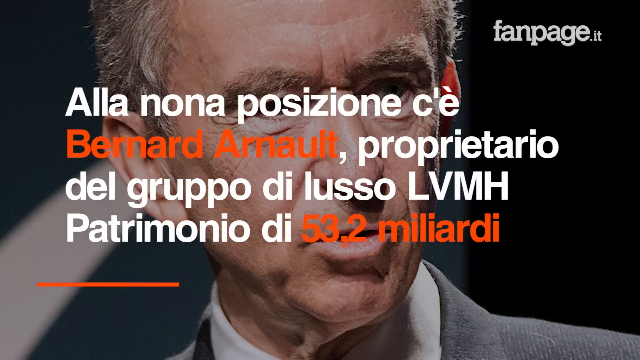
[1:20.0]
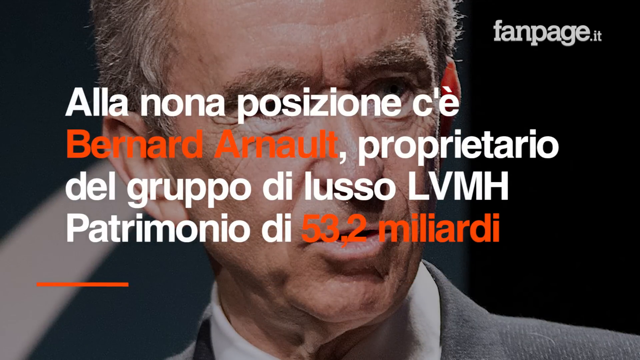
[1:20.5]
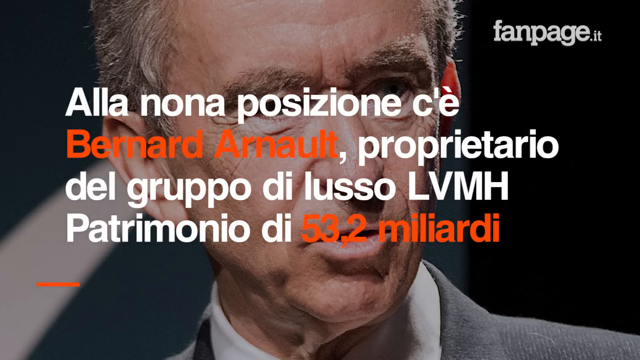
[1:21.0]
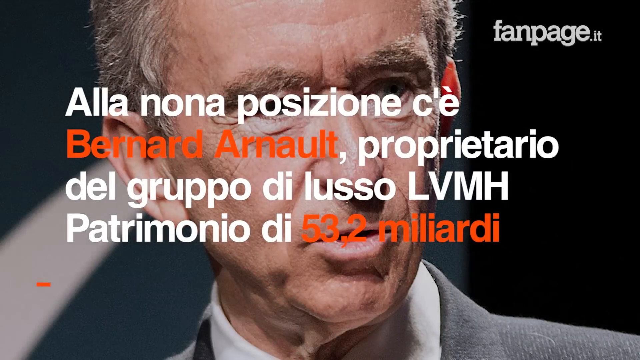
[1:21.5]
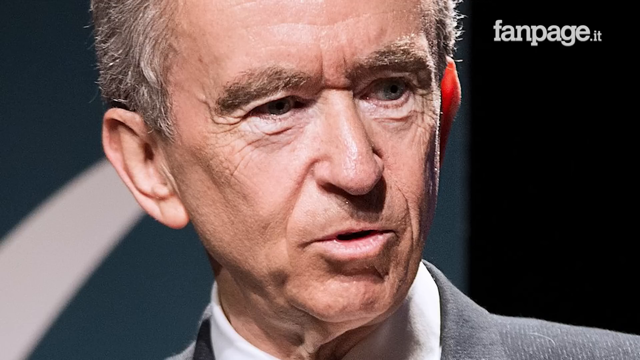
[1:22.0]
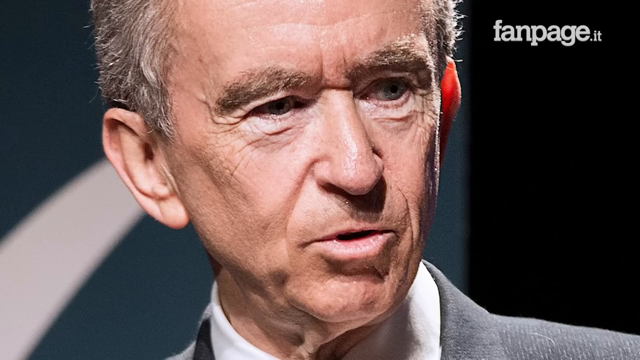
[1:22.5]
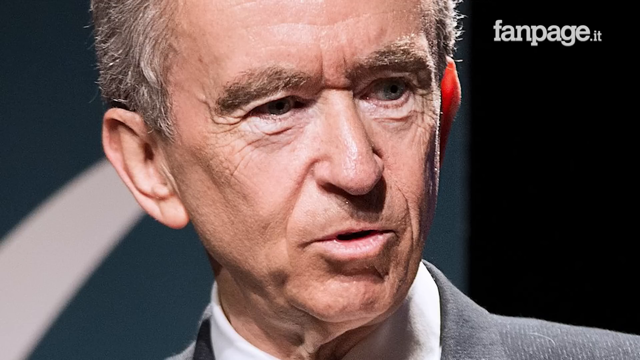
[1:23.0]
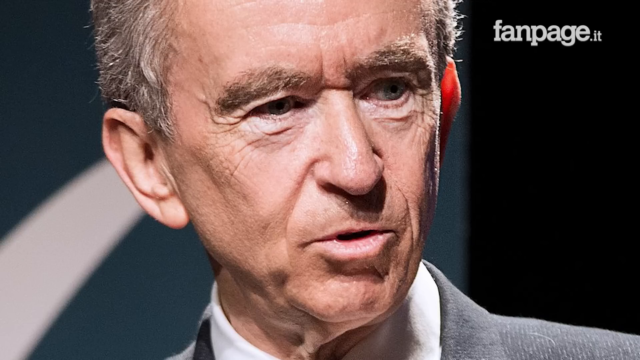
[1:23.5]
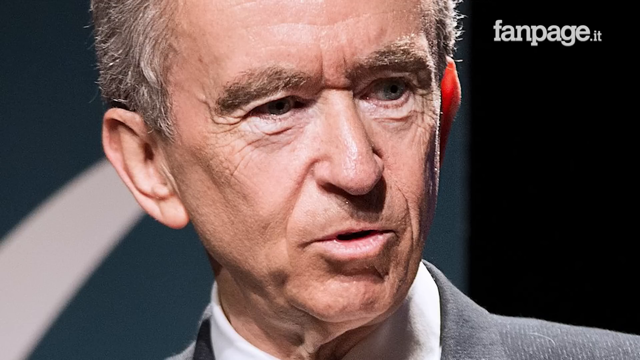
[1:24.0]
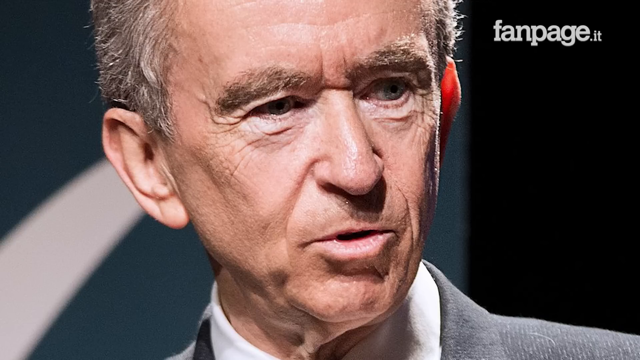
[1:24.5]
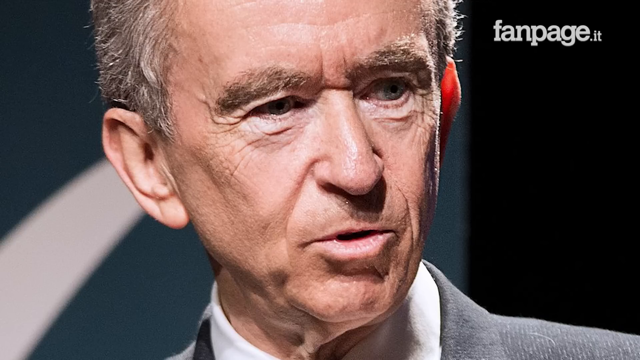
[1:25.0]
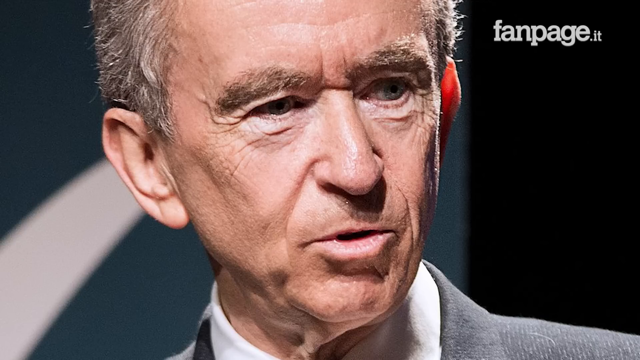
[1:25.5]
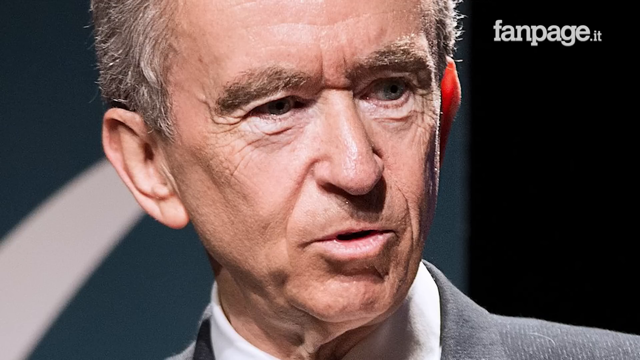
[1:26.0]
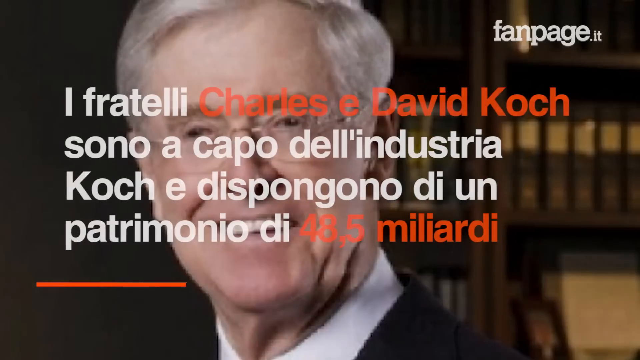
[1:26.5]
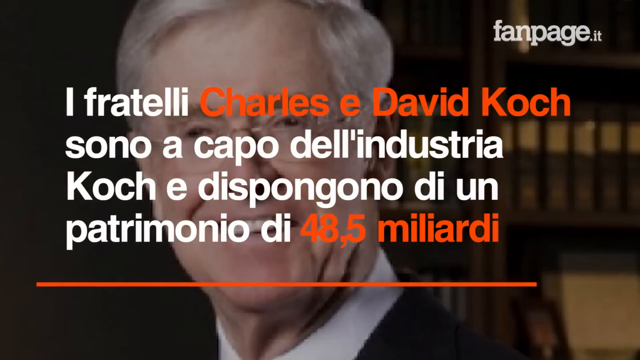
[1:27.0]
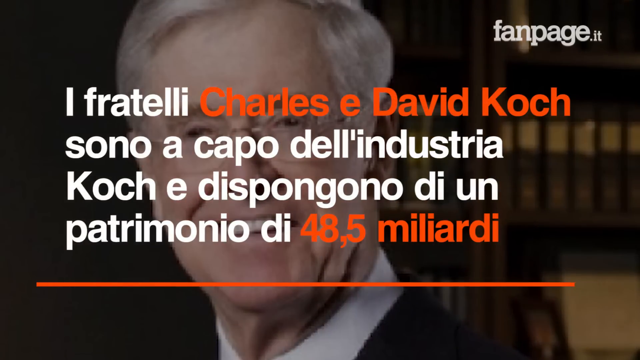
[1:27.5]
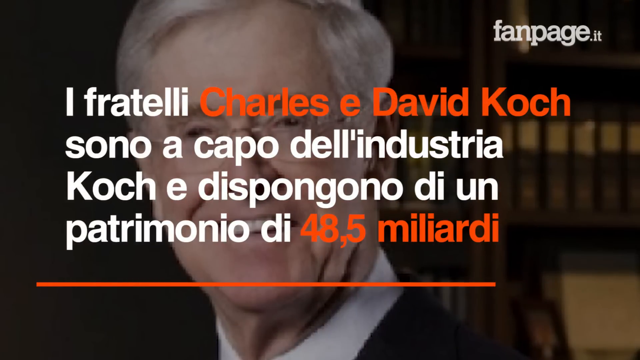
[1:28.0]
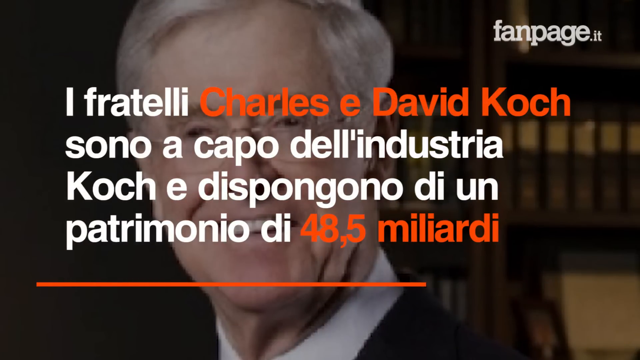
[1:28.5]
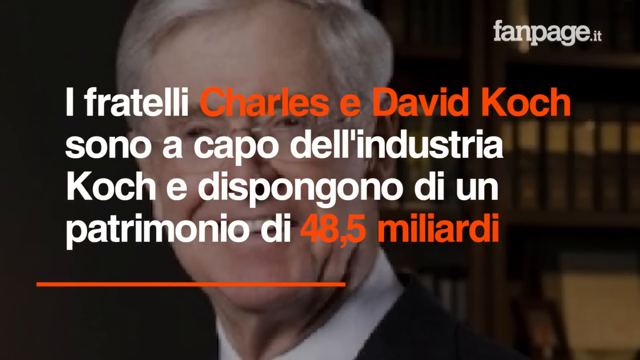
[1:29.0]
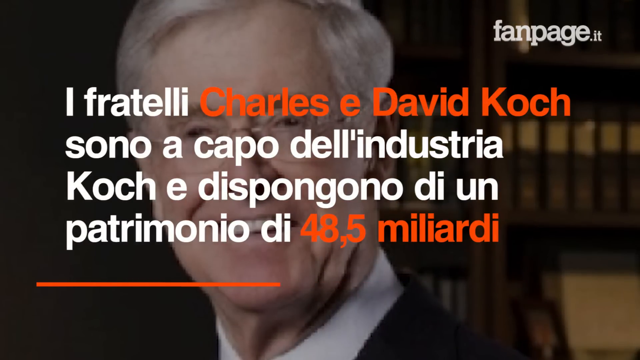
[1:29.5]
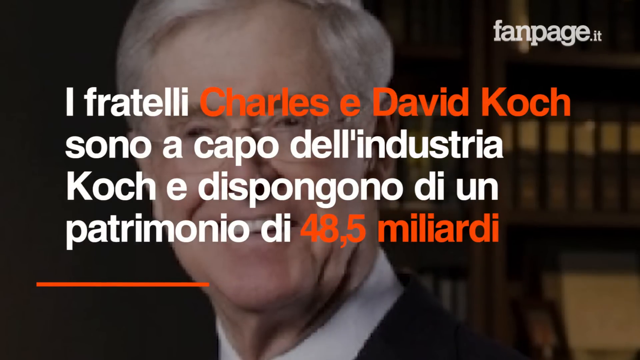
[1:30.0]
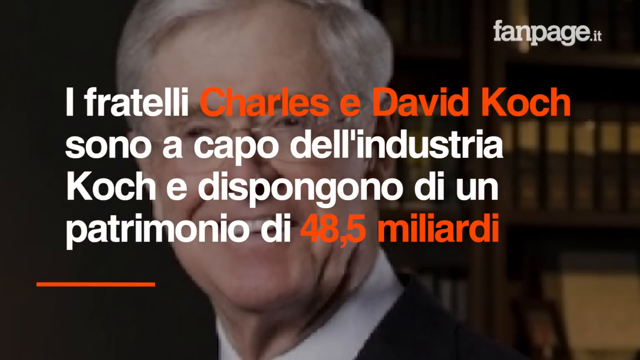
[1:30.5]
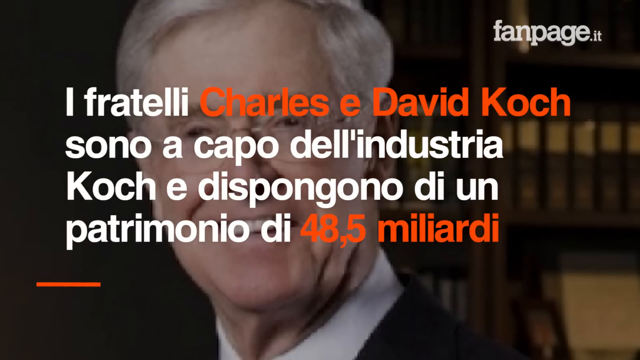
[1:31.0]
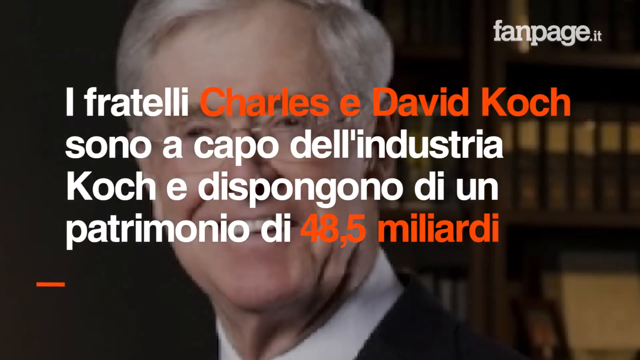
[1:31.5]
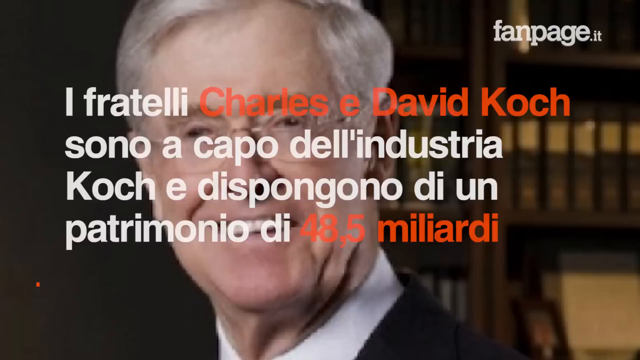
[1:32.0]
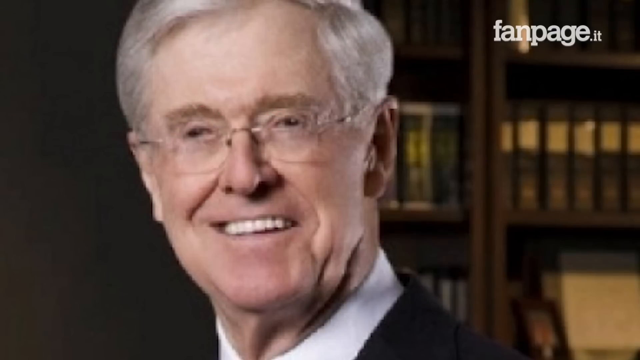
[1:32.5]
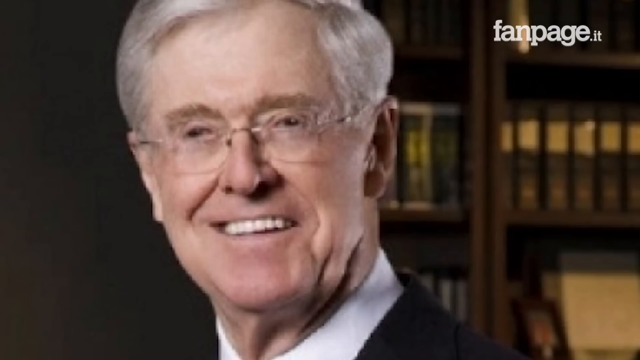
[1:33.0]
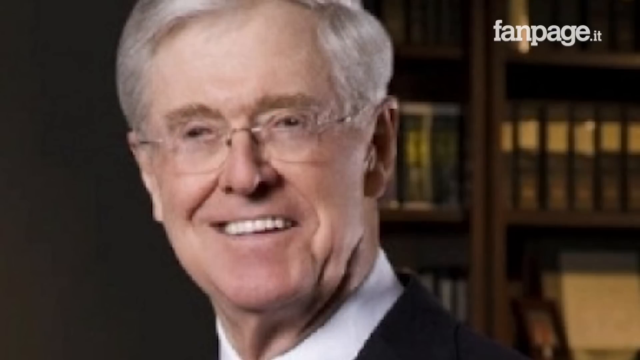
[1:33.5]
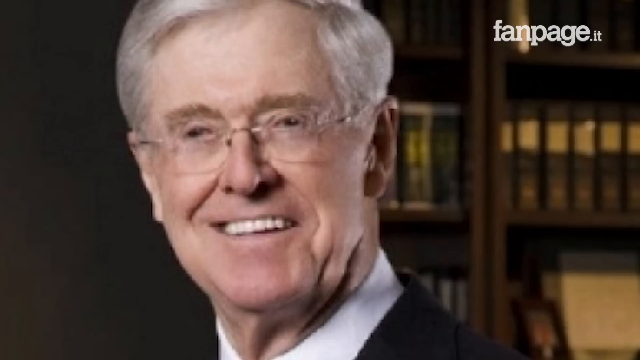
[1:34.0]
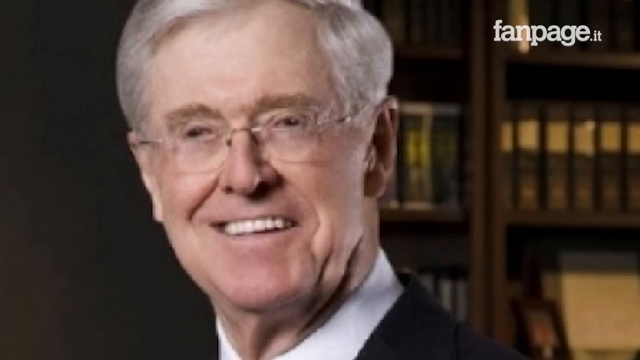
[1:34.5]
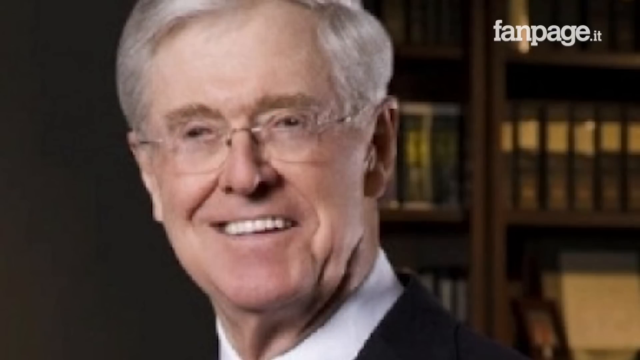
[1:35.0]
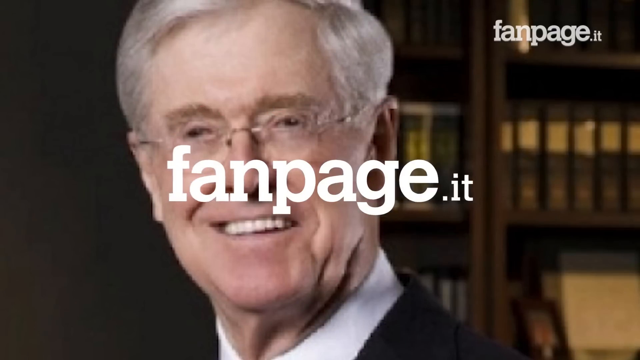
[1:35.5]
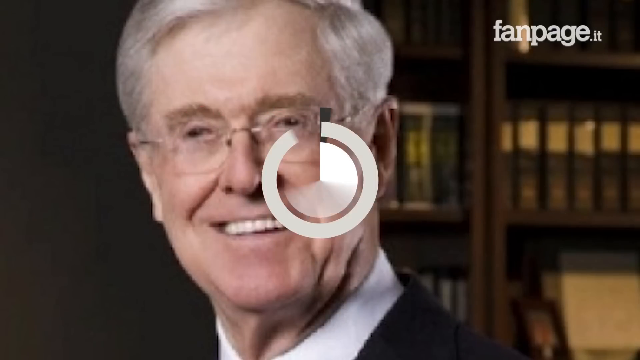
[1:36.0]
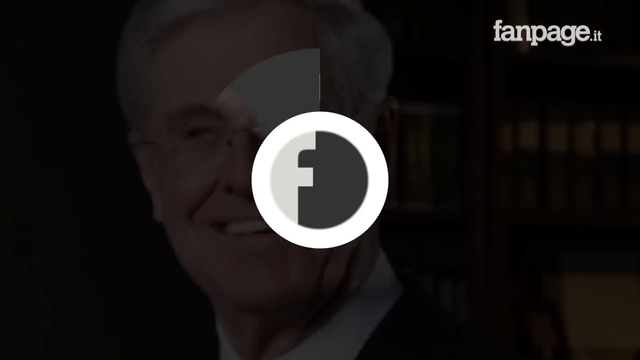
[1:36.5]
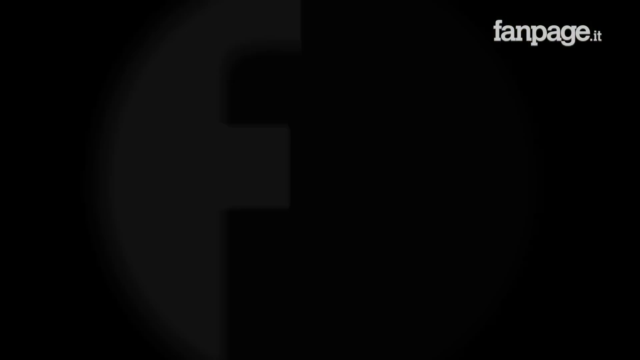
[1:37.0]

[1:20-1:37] Once the text goes away, the man looks like a slim George W. Bush, with fairly big ears and a narrow chin. The video then cuts to a man with glasses, gray hair and a big smile, with books on a shelf behind him to the right. Text comes across reading "Charles E. David Koch", and the rest of the text is white except for the money at the end. He has a wrinkly neck and big ears, a row of his top teeth shows as he smiles, and a little of his white shirt collar is visible. Then "fan page .it" appears in the center. A small circle goes around and ends in a circle whose left side looks like half of an F in white, while the rest is black; the background is also black. As it goes around, there is a center circle with an outer circle going around it. "fan page .it" is still in white in the top right.